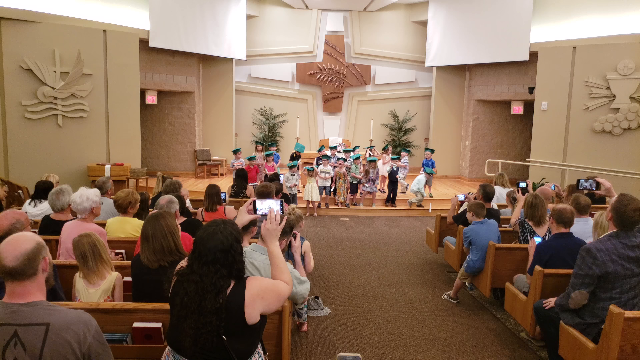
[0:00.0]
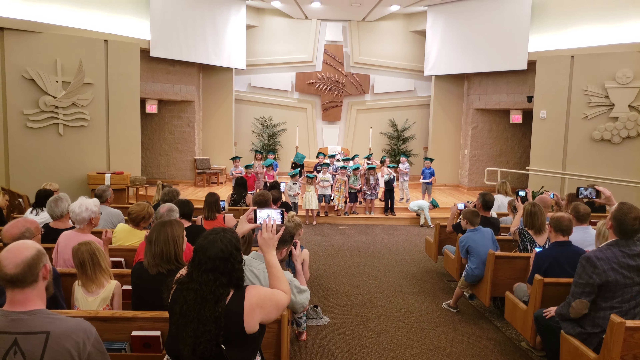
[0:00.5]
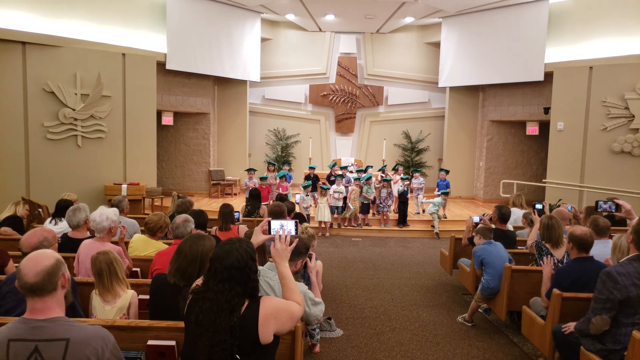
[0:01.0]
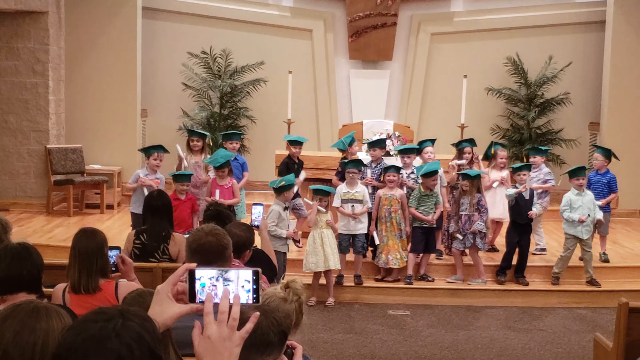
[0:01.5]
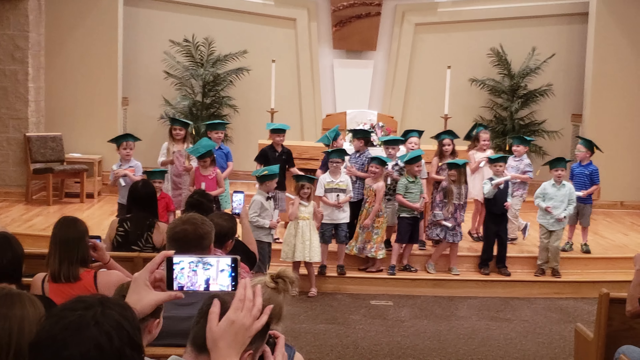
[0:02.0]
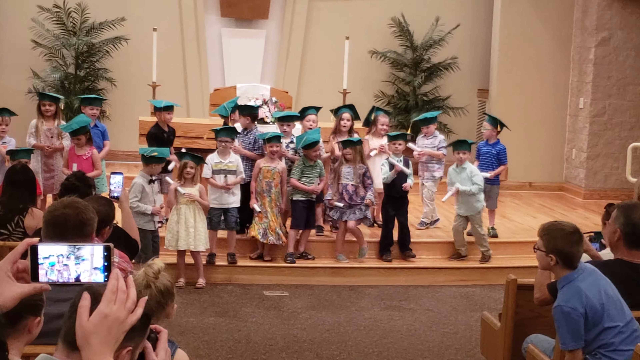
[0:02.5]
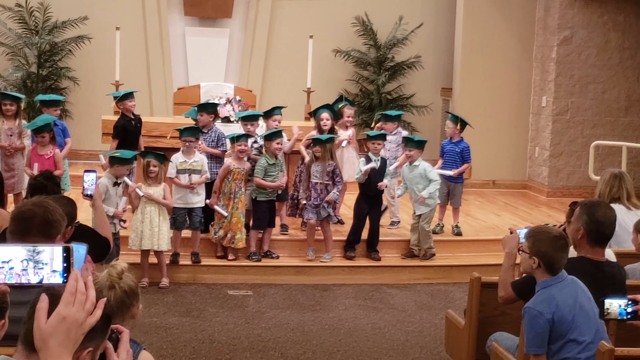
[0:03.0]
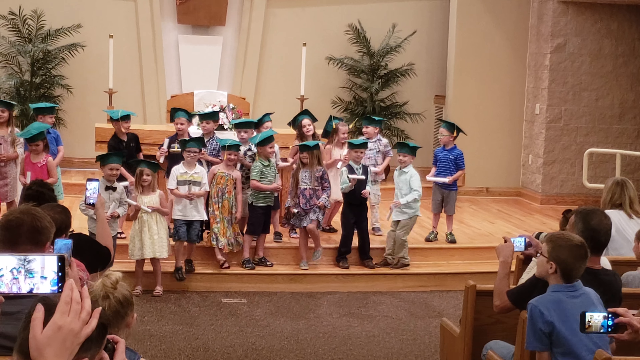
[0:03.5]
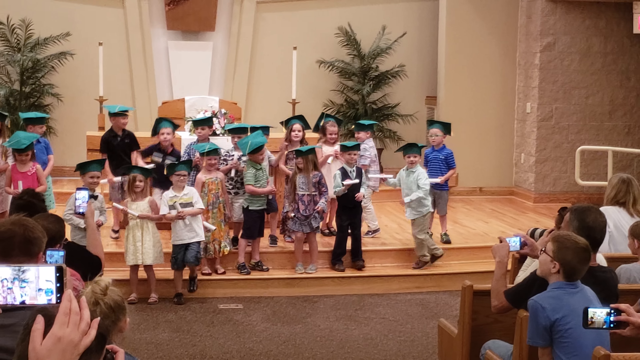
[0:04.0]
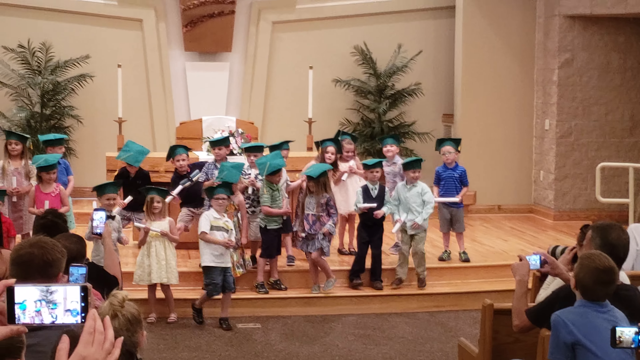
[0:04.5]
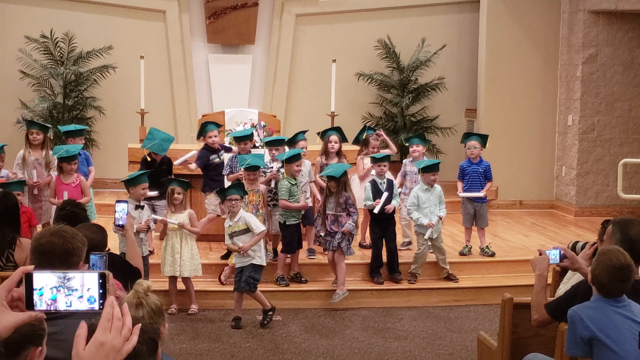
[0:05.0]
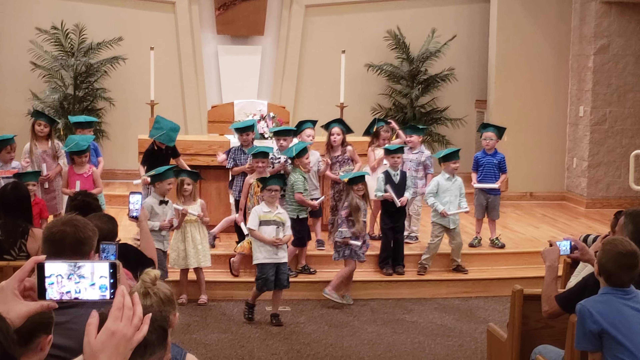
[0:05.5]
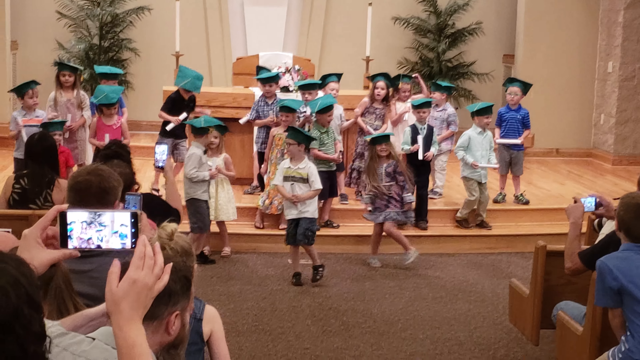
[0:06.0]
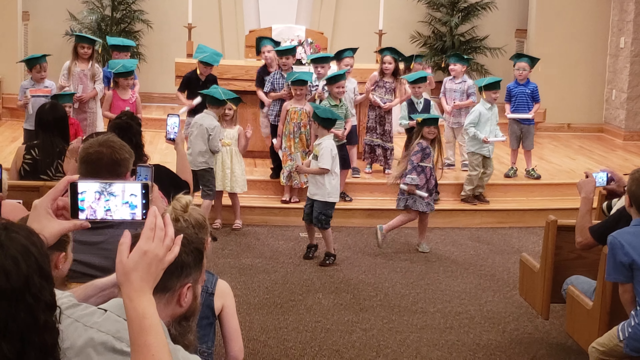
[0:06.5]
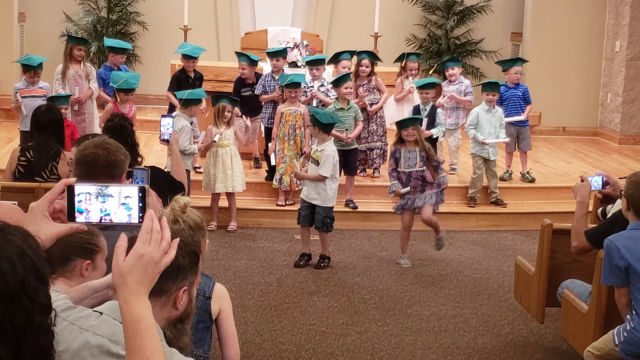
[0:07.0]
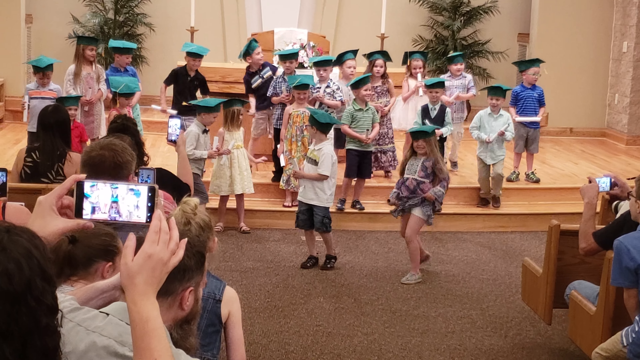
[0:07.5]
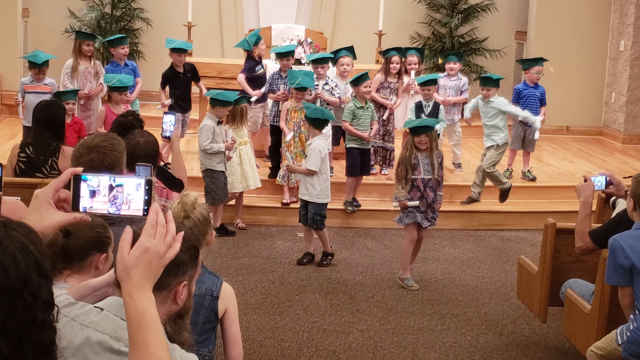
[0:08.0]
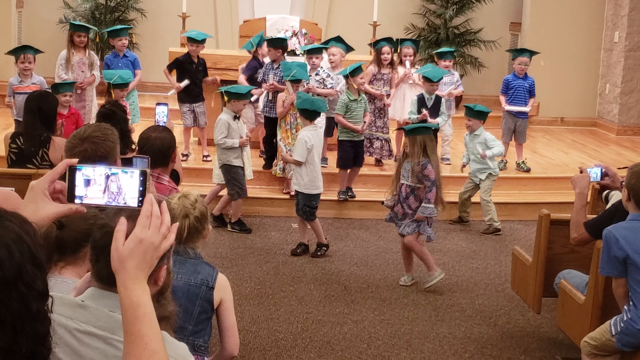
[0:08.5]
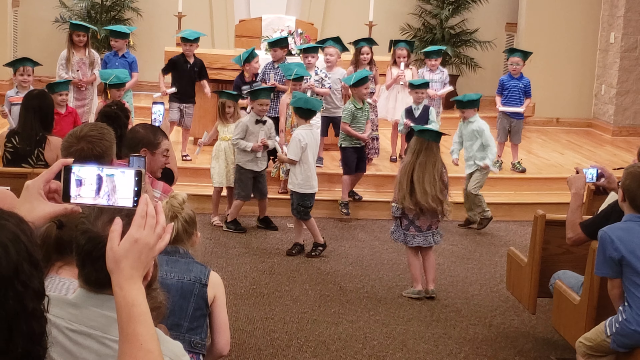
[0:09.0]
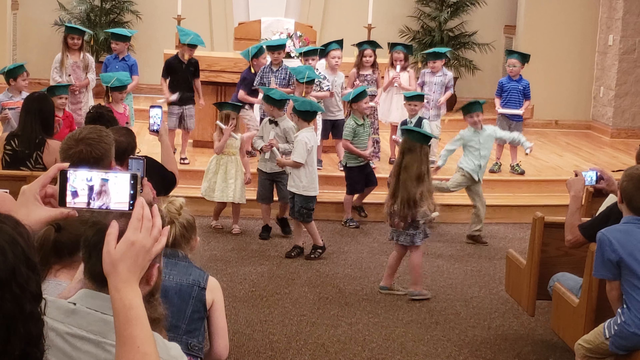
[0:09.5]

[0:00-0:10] Inside a church, what appears to be a children's event of some type takes place; it is unclear whether it is a small graduation ceremony or a confirmation. The kids wear little green hats, possibly singing, and they jump around and seem excited. Parents and grandparents in the audience take pictures and record the event. There is a lot going on among the kids and the people attending, and the interior of the church building is visible.